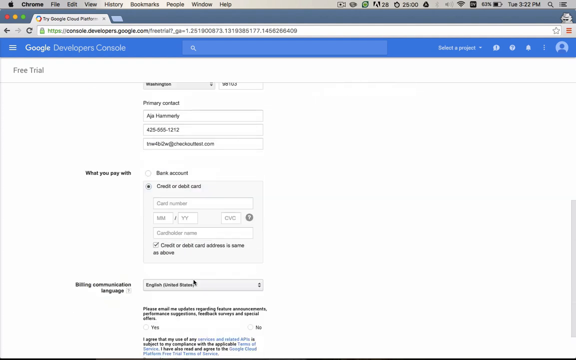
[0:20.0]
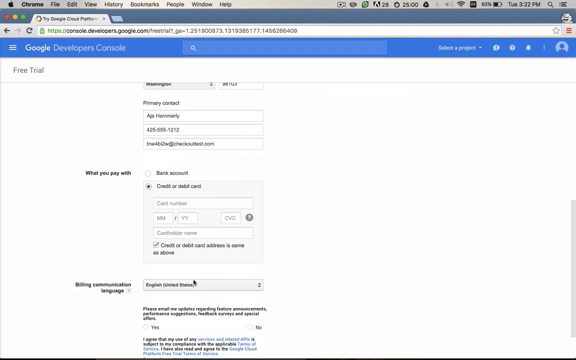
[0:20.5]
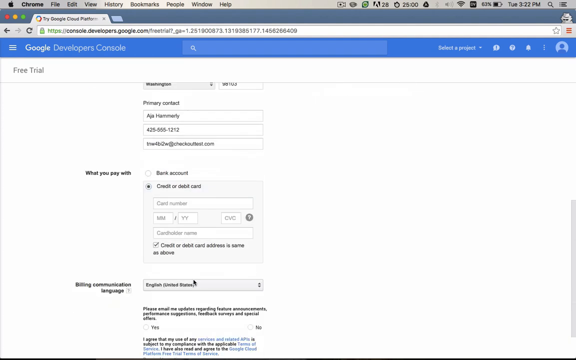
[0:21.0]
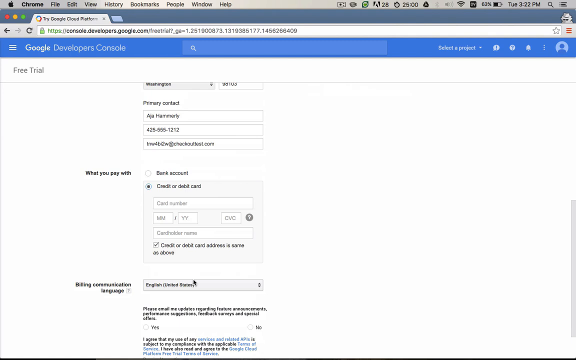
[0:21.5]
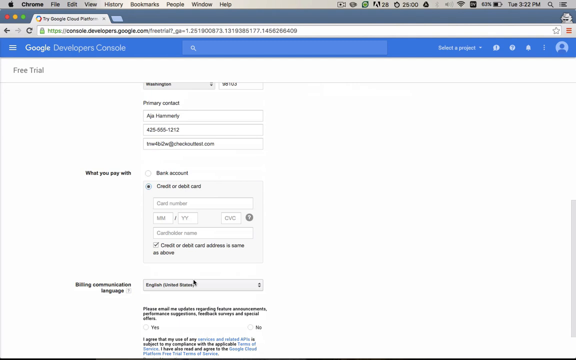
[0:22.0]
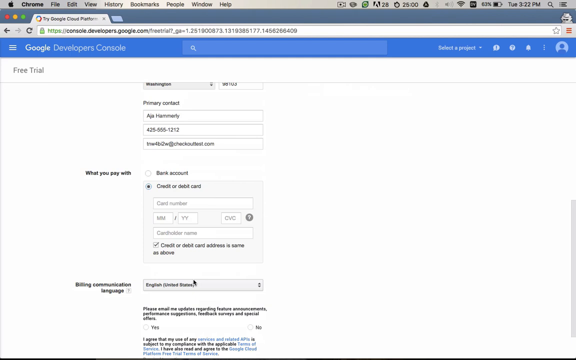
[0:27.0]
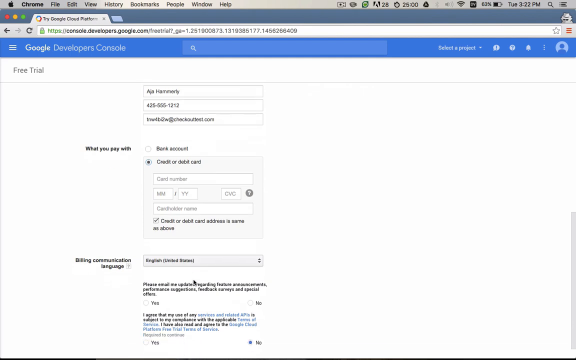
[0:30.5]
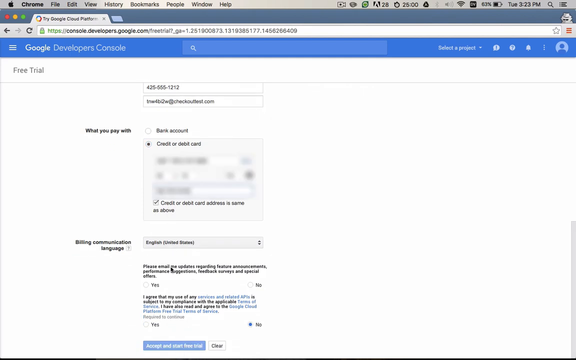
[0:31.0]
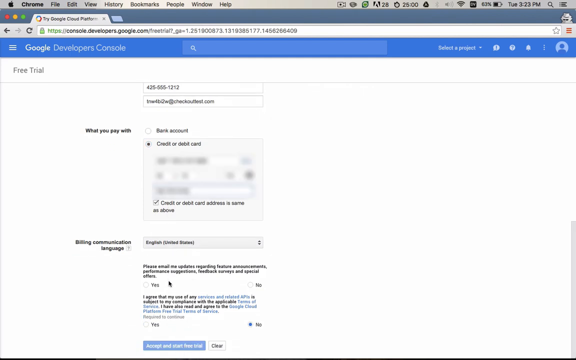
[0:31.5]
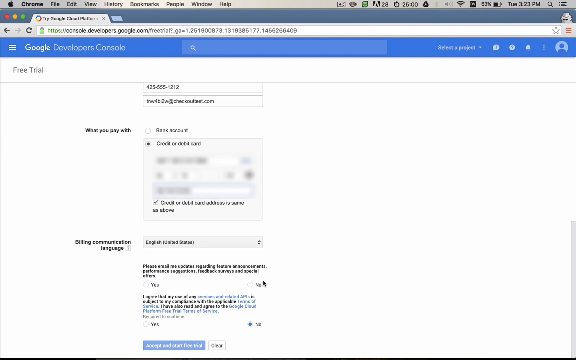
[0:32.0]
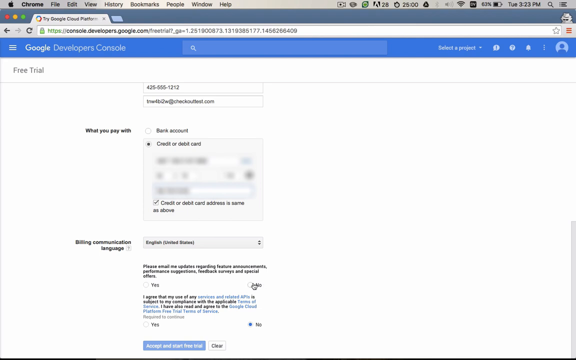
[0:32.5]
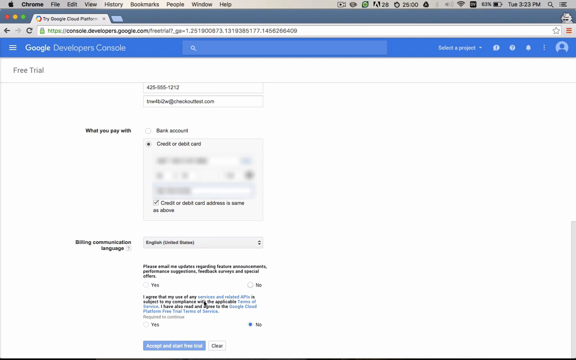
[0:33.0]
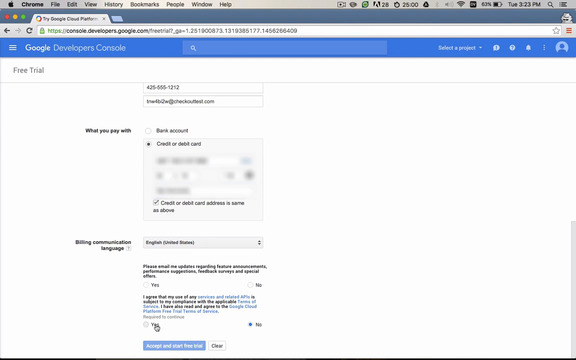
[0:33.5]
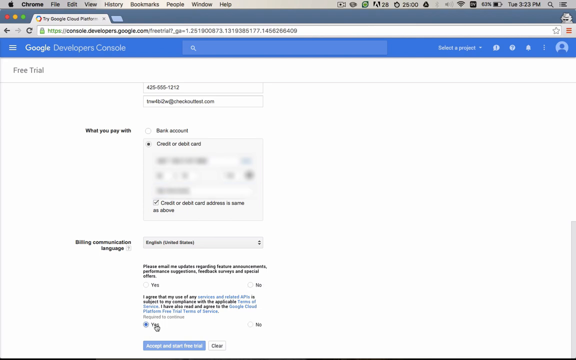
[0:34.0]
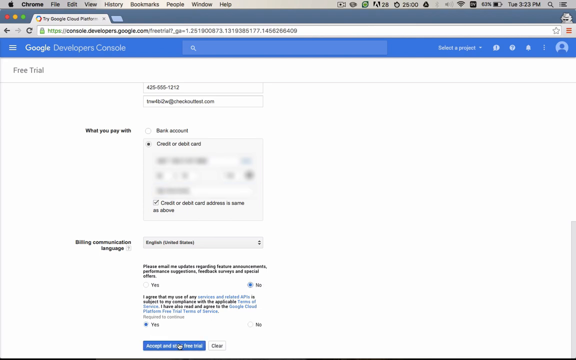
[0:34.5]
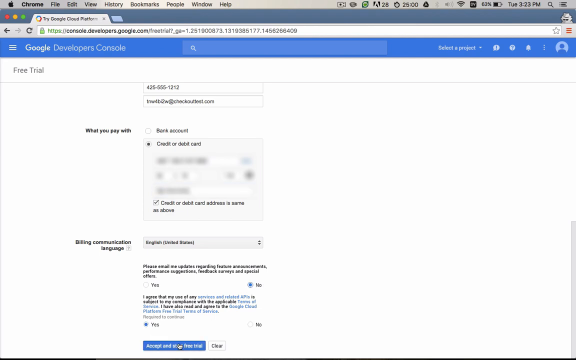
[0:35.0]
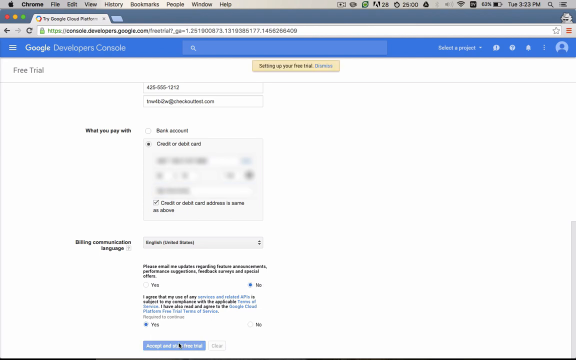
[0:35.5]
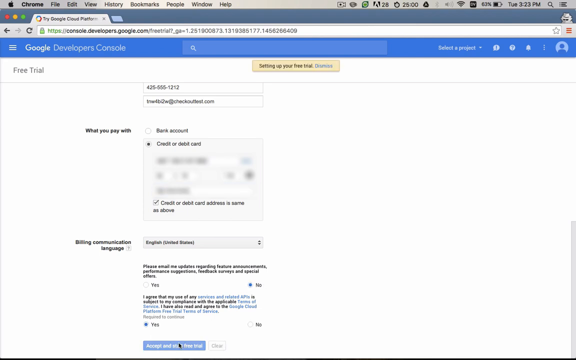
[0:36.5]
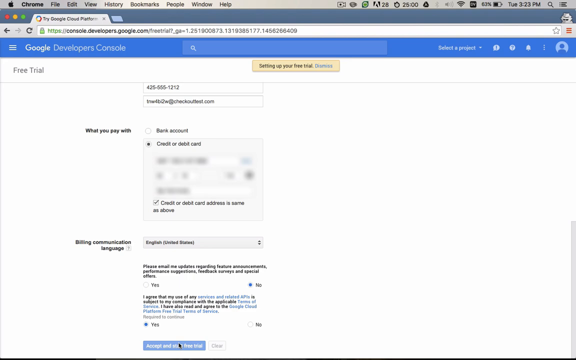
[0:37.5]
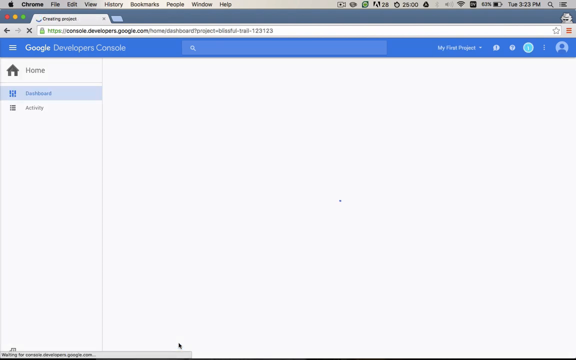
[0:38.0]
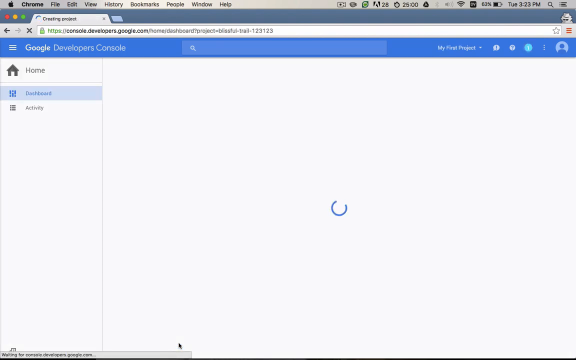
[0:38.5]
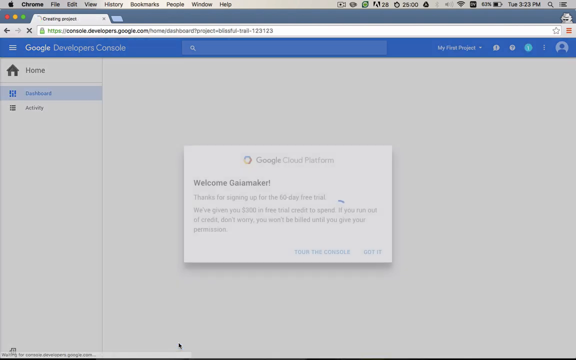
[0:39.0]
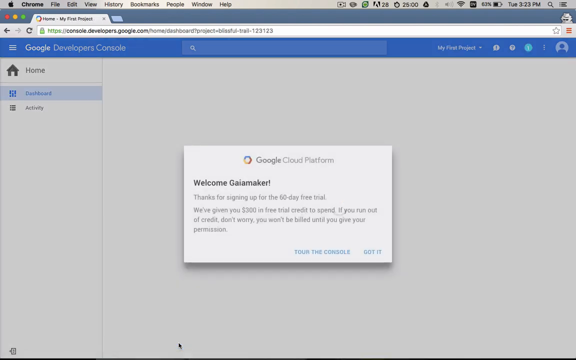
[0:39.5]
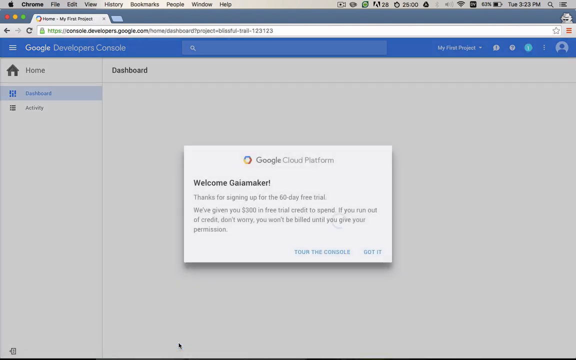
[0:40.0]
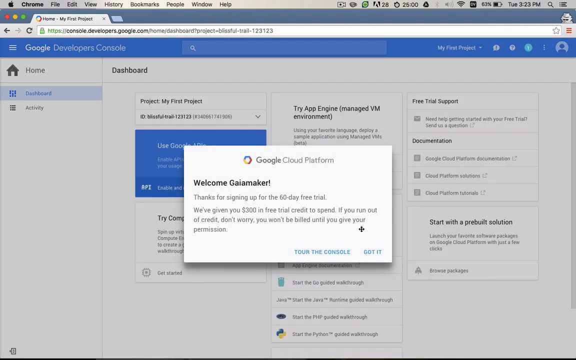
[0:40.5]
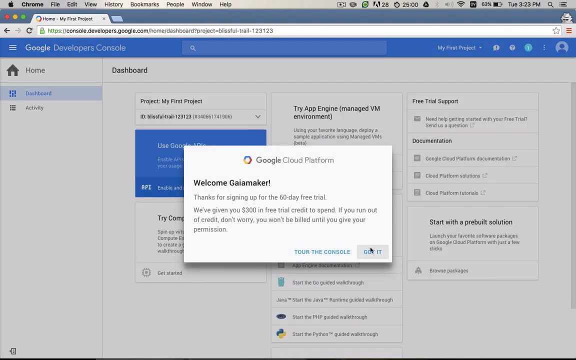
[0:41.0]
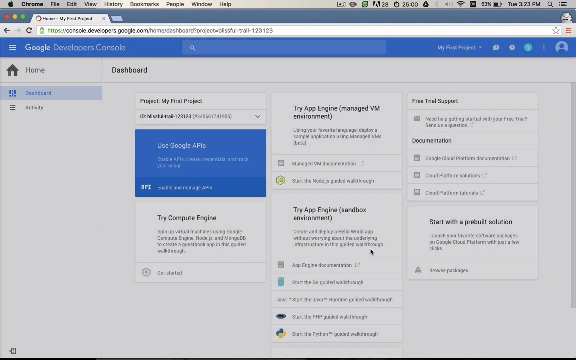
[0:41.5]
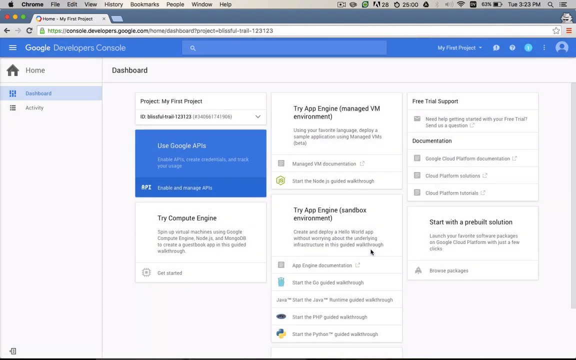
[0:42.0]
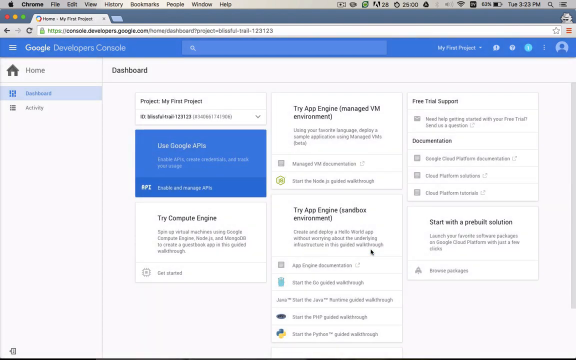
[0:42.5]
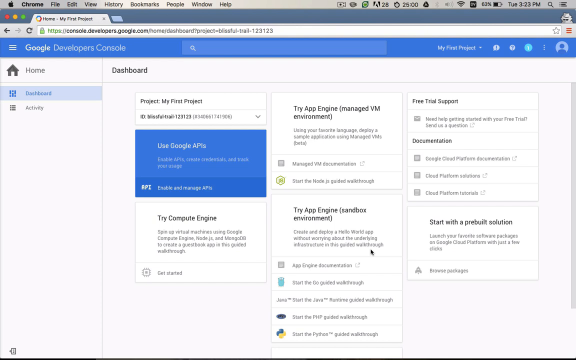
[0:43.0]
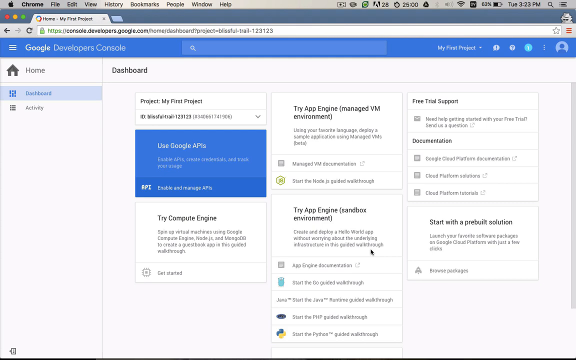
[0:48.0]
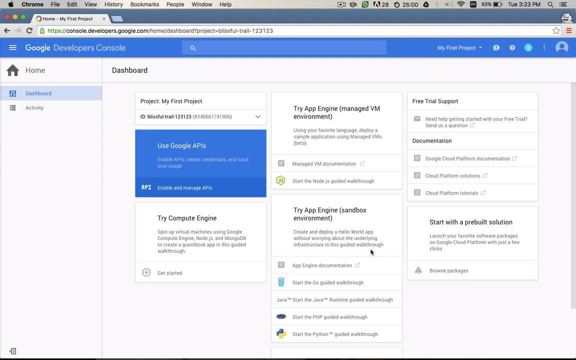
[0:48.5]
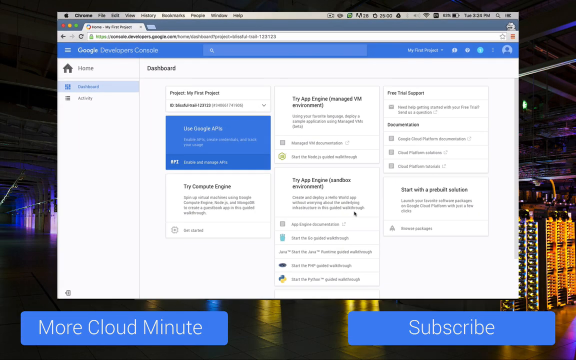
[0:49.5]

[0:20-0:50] After the personal information is filled in, the form moves on to credit card information. The credit or debit card option is clicked, and the card information is blurred out on the screen. The mouse moves down and clicks the button at the bottom. A welcome message appears: "welcome Gaia Maker, thanks for signing up for the 60 day free trial. We've given you $300 free trial credit spend. If you run out of credit, don't worry, you won't be billed until you give your permission." It also says "tour the console", with a plus sign there. The message is cleared and the main Google screen appears, which is then kind of squeezed down so the desktop behind it becomes visible.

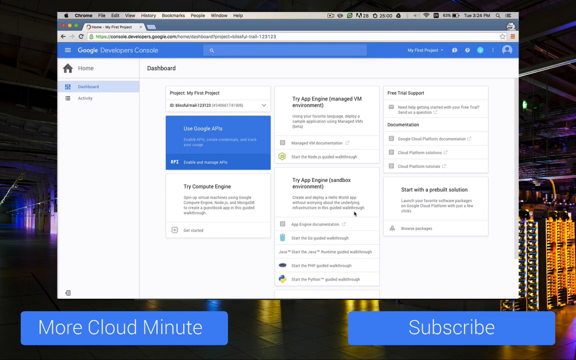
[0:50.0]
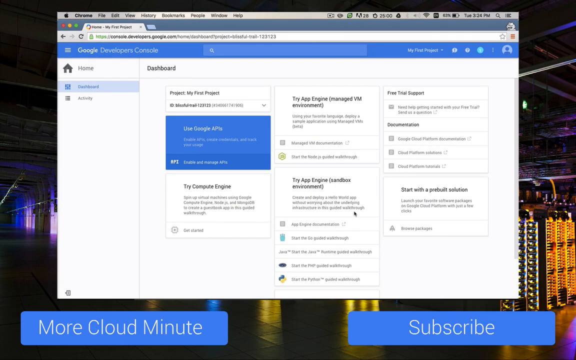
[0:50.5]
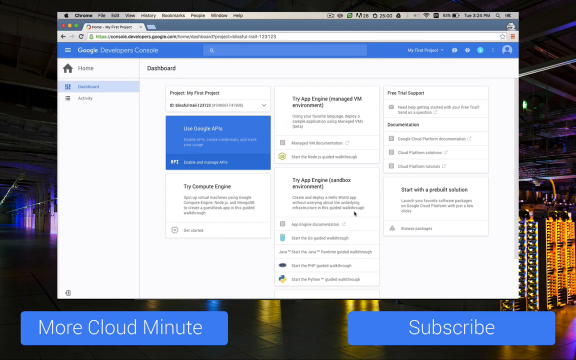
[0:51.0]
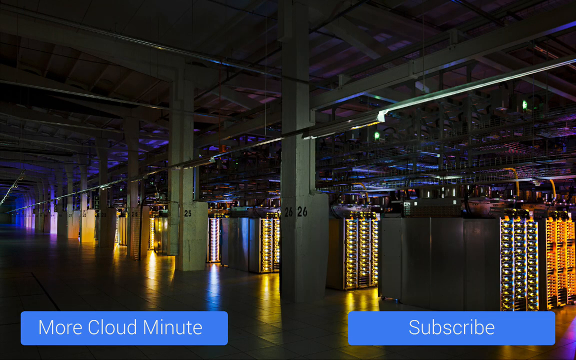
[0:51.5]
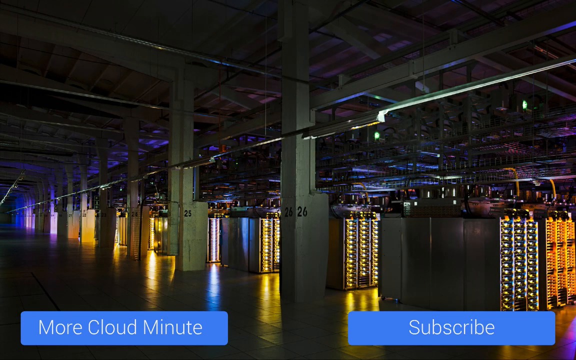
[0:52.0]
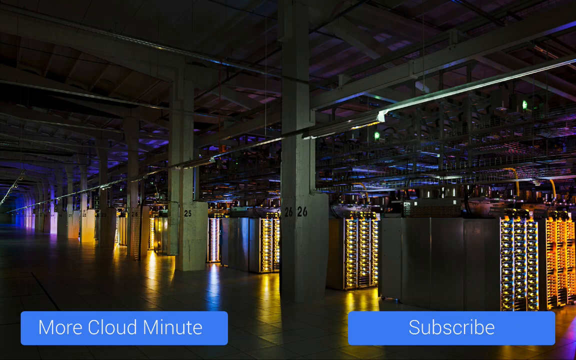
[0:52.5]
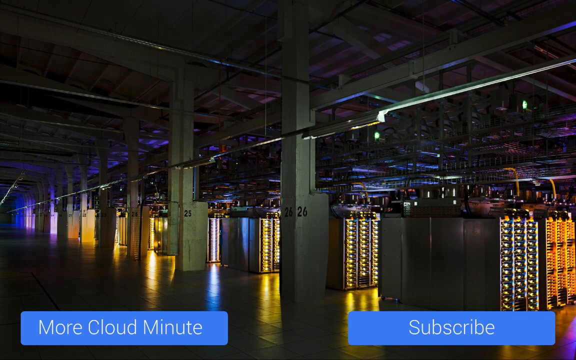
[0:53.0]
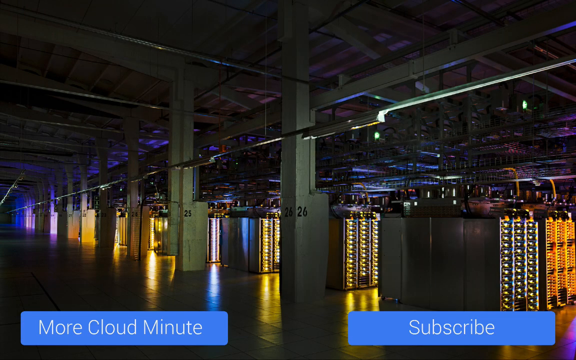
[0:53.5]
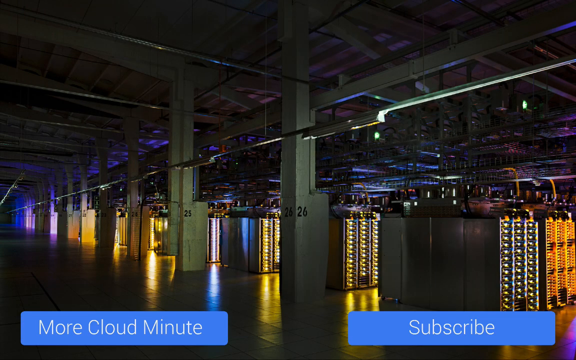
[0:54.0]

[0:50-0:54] The web browser, no longer maximized, shows the cloud.google welcome page with the desktop visible in the background, and the mouse is in the center. The Google website says "try App Engine". The Google website then disappears, apparently revealing the desktop background behind it. The desktop has an intricate picture of concrete blocks labeled 25 and 26, almost labeled like a parking structure, and each block seems to hold a huge bank of servers or something similar.